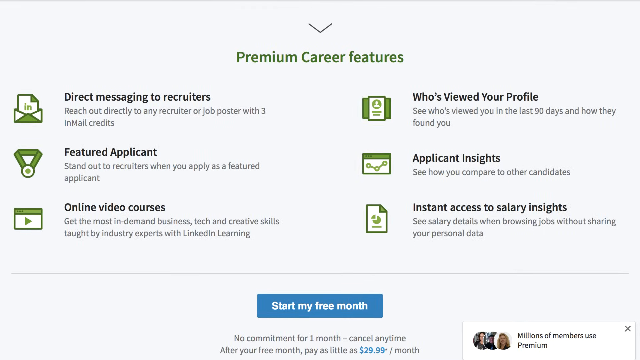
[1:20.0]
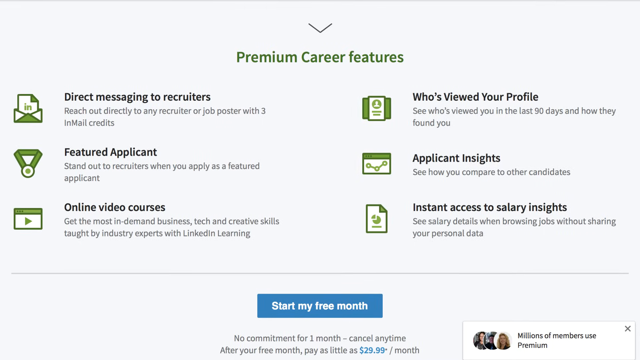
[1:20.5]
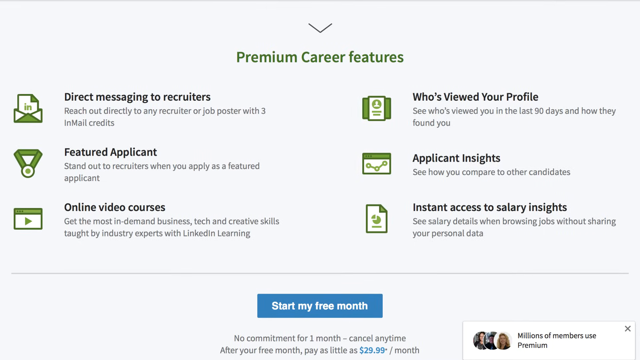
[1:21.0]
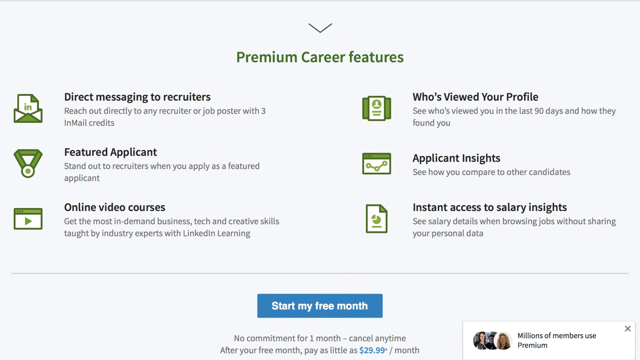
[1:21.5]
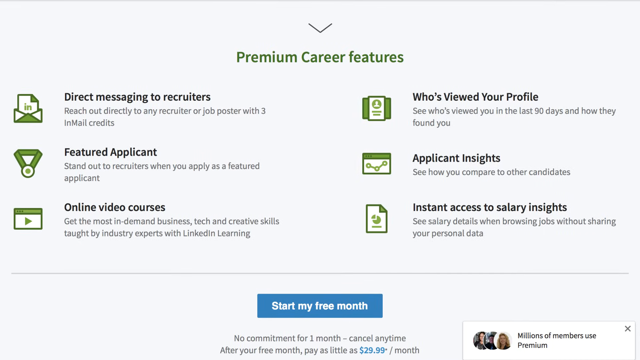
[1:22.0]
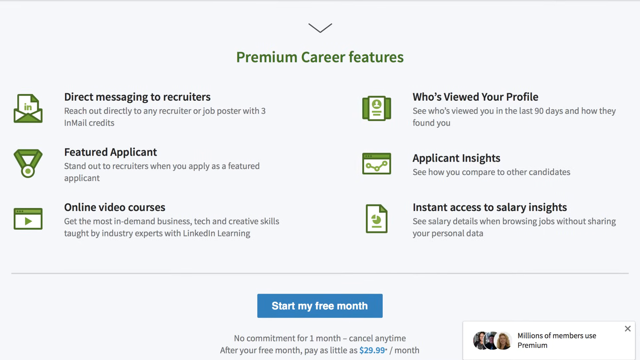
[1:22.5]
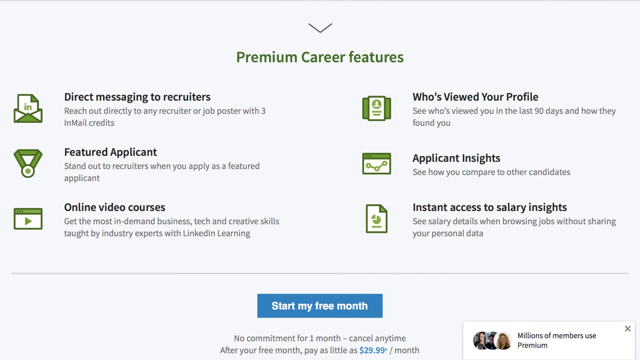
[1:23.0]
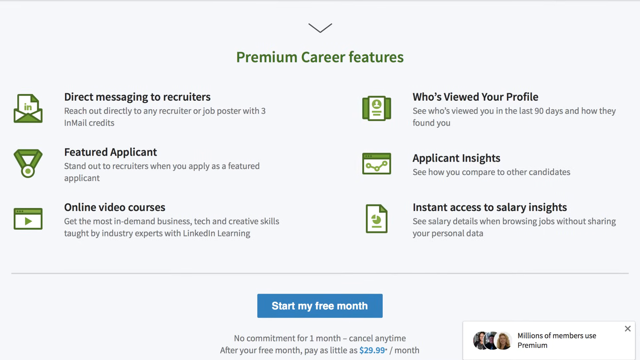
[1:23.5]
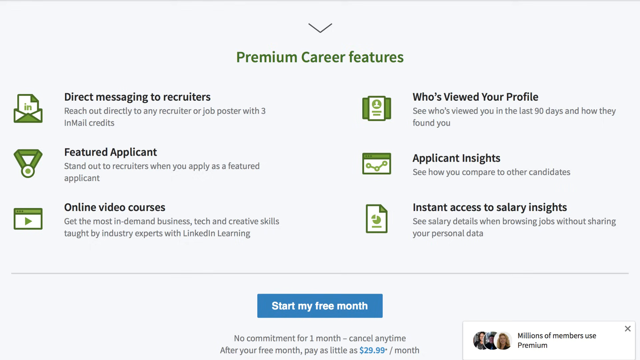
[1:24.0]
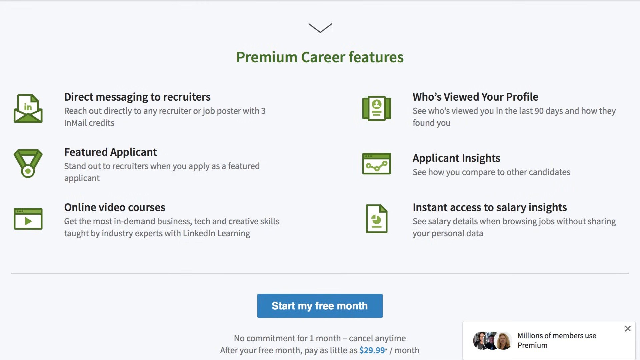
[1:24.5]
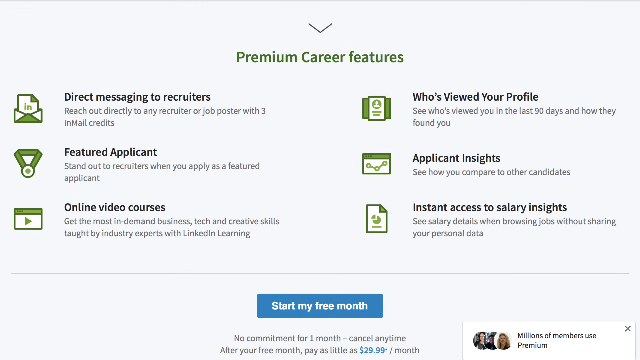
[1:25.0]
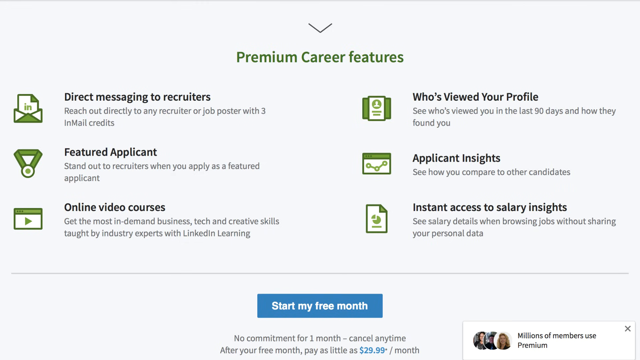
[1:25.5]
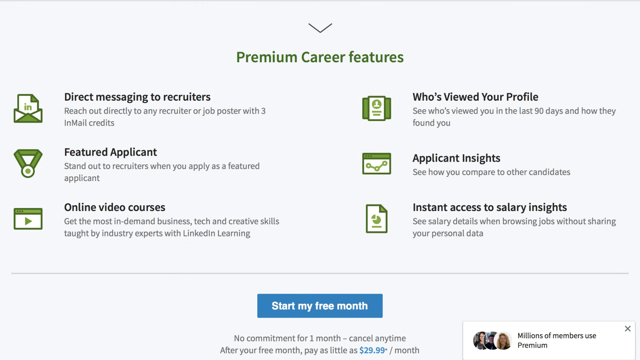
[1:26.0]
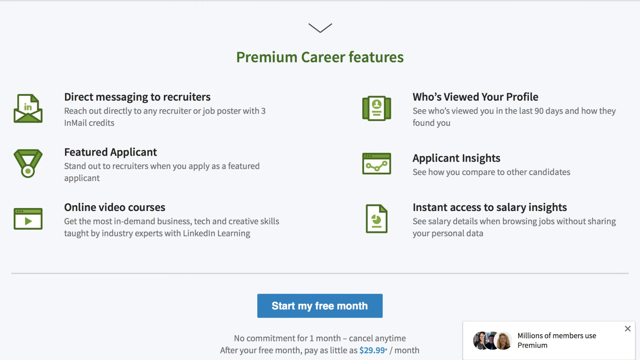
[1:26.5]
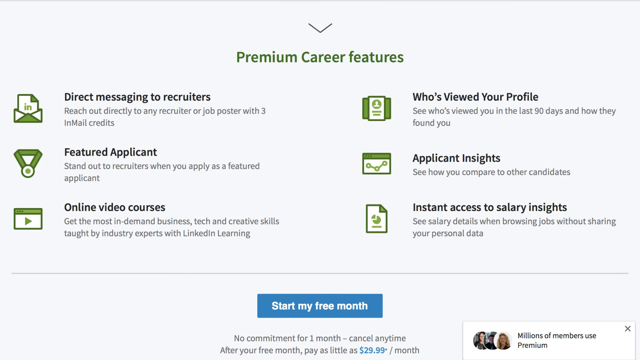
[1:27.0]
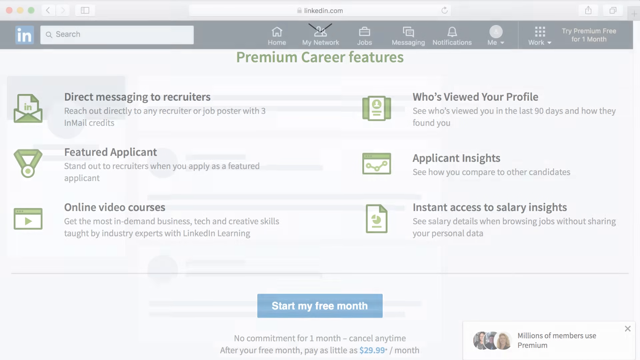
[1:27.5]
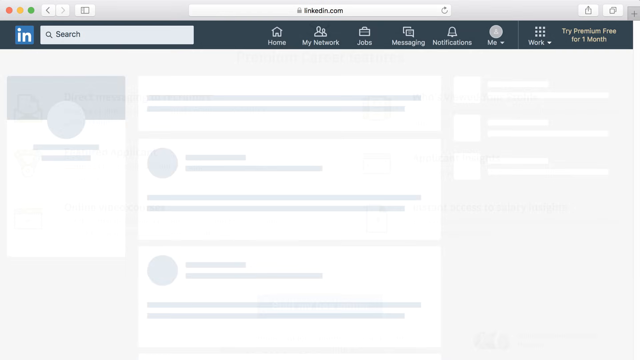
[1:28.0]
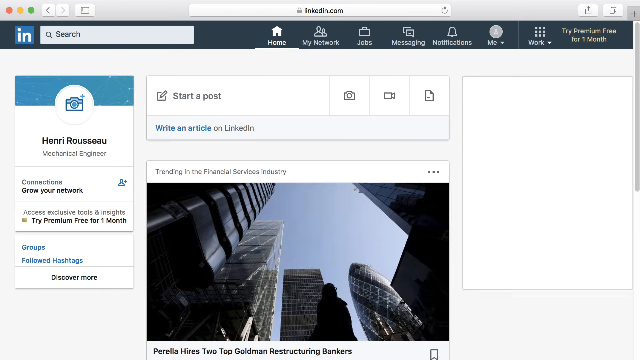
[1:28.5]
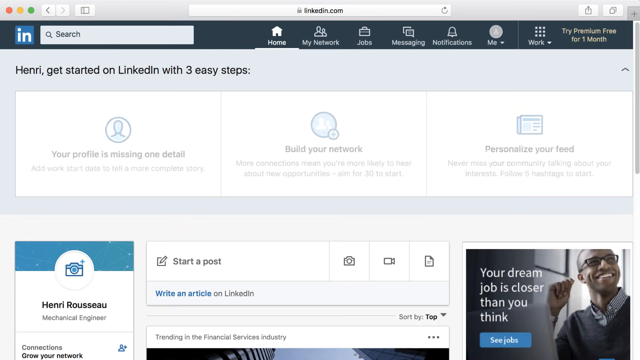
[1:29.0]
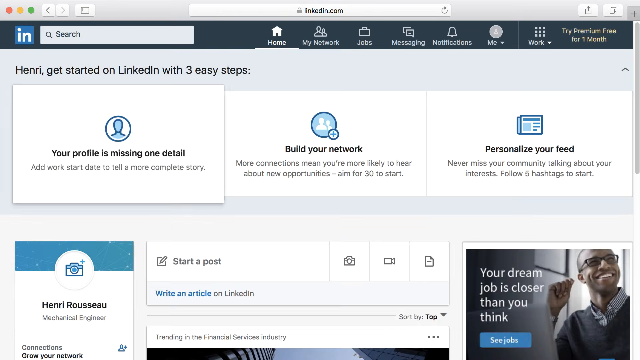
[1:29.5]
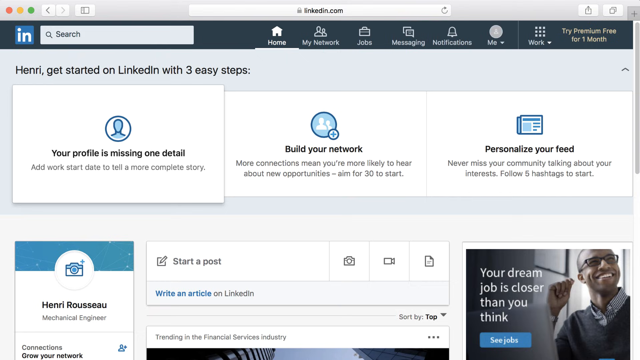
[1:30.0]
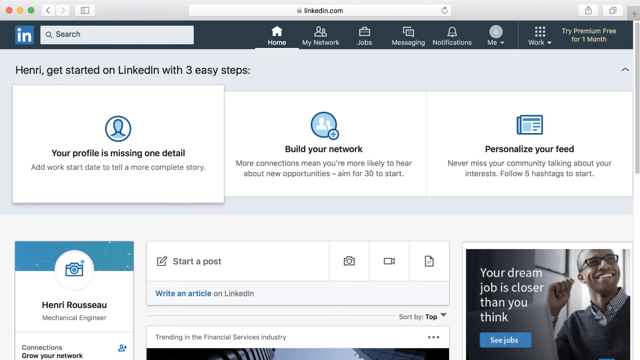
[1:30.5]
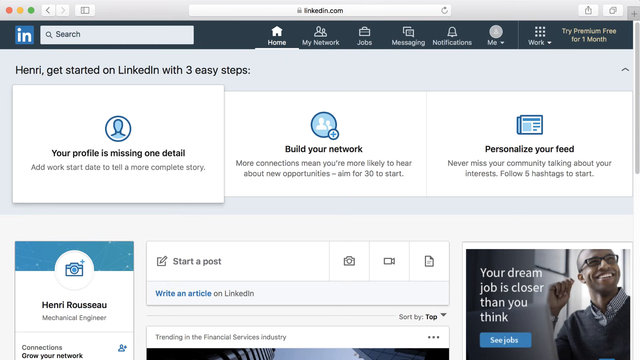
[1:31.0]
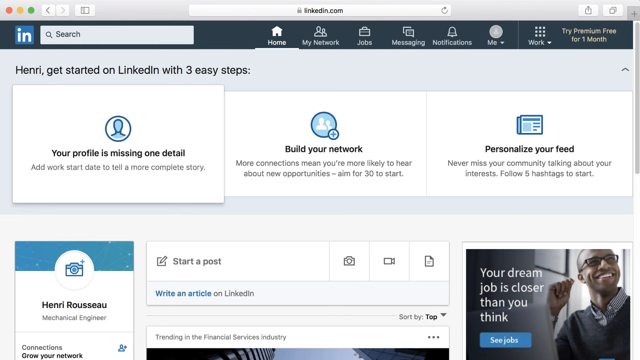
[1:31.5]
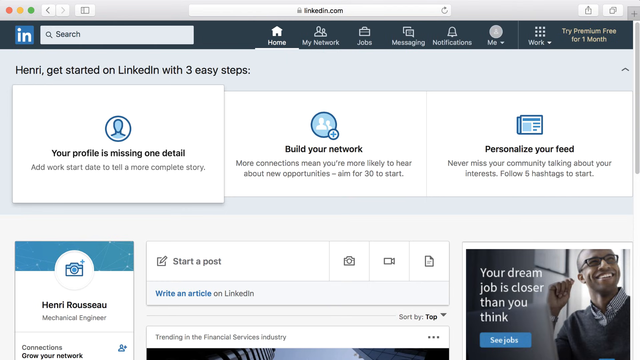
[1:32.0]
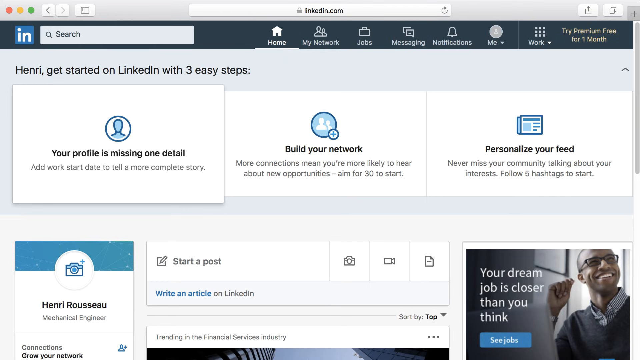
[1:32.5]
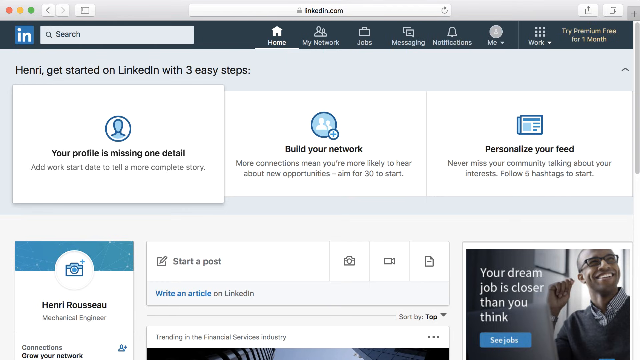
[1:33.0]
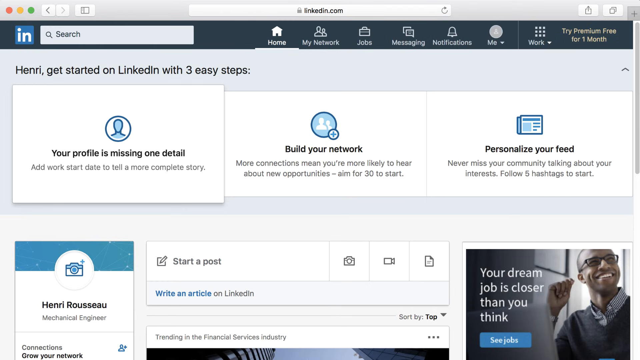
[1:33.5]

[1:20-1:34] A last menu shows the Premium career features, six of them. The view goes back to LinkedIn Premium and then to the profile, which has missing details to fill in. After they are filled in, the account is shown signed in to LinkedIn and the page is scrolled down. The job title is shown again, along with agreeing and confirming the email; then Gmail appears with the pin, the email is agreed to, and the process continues.